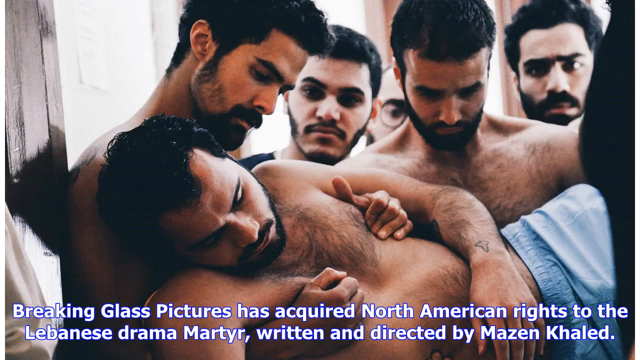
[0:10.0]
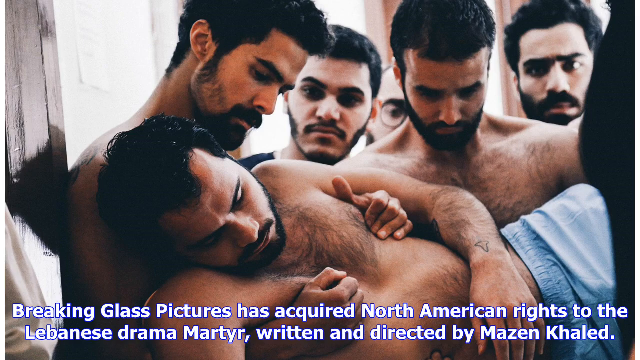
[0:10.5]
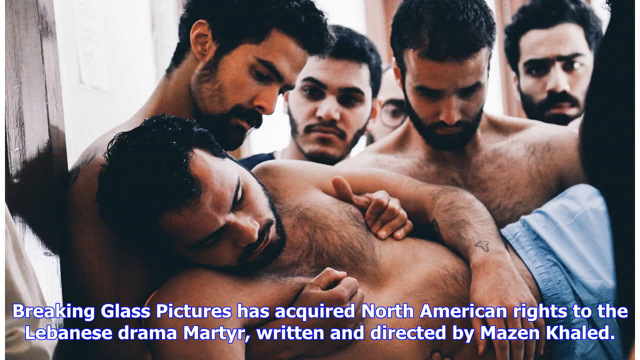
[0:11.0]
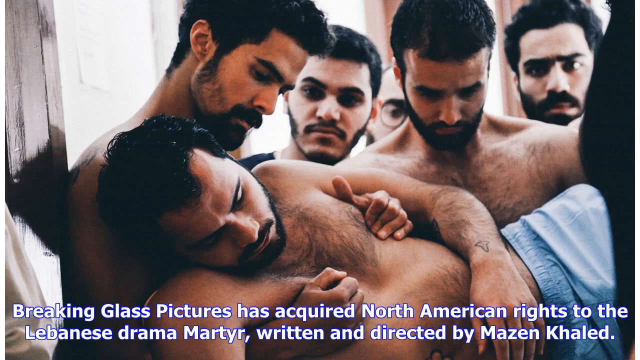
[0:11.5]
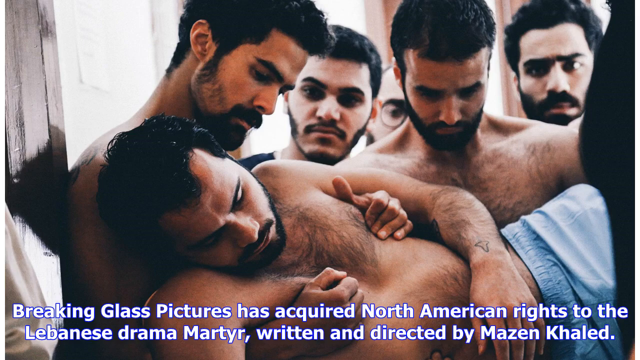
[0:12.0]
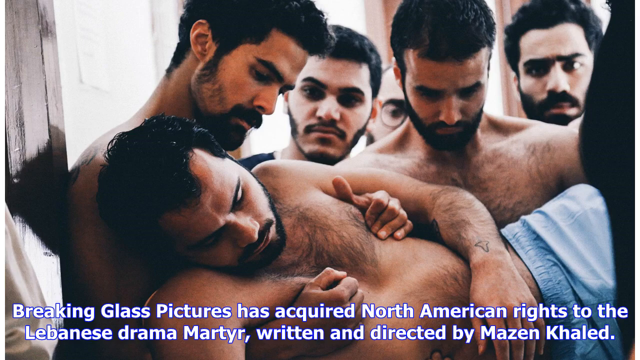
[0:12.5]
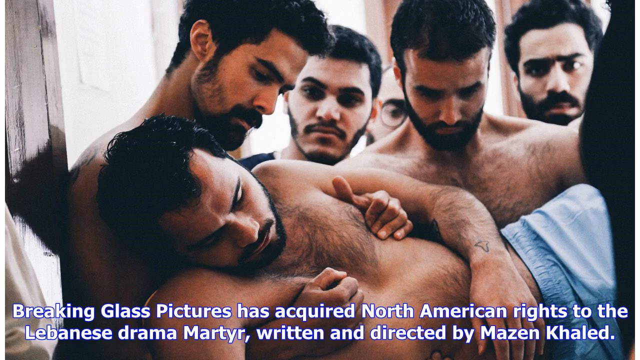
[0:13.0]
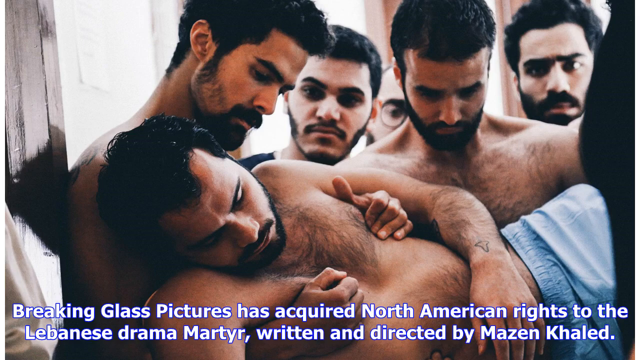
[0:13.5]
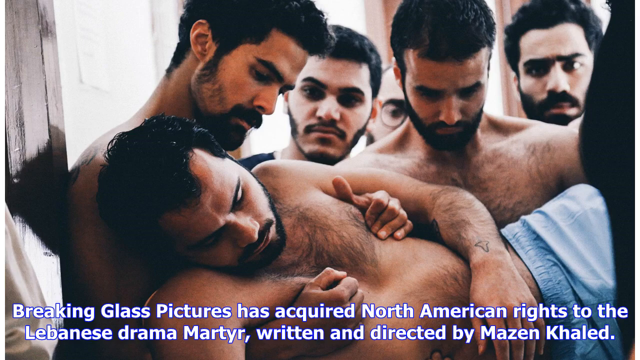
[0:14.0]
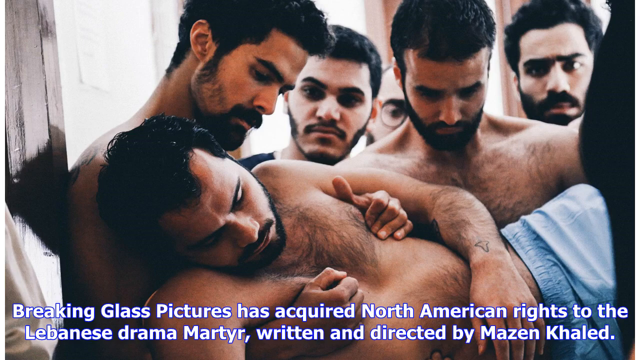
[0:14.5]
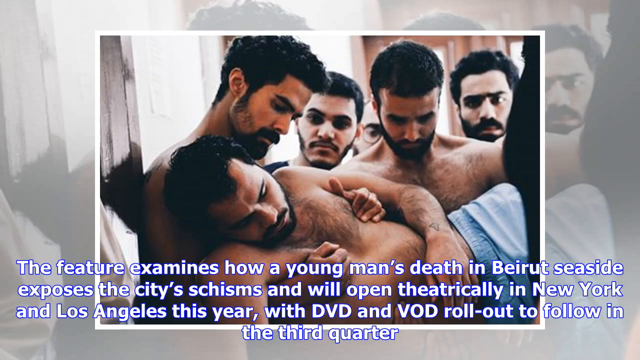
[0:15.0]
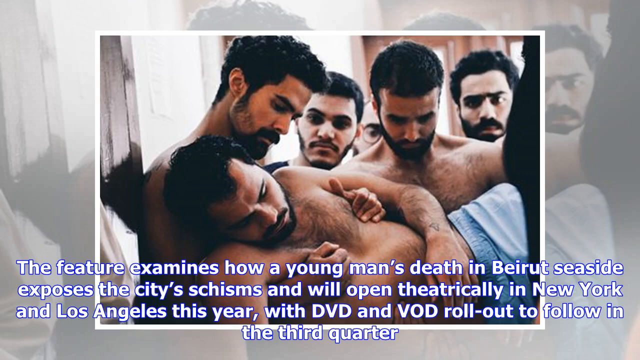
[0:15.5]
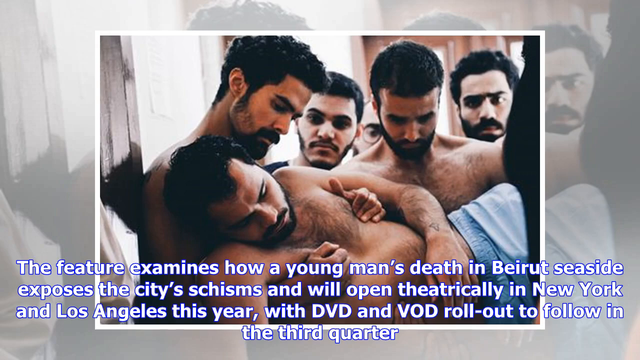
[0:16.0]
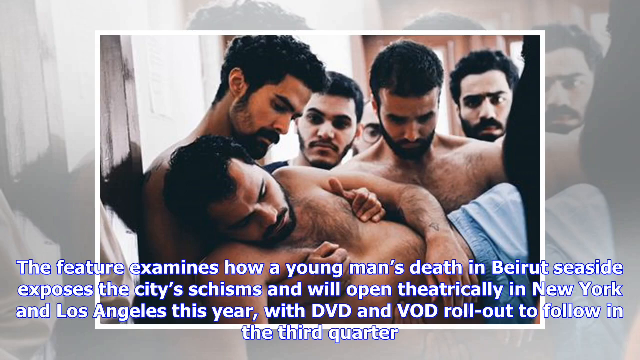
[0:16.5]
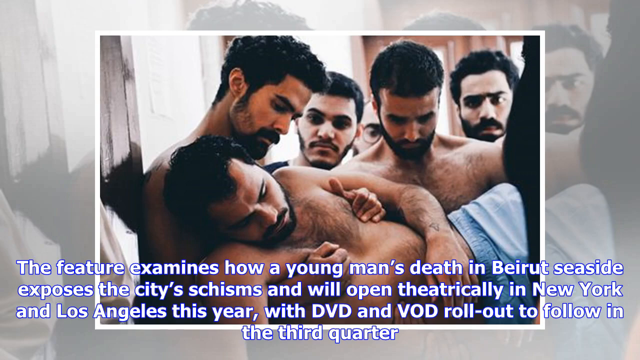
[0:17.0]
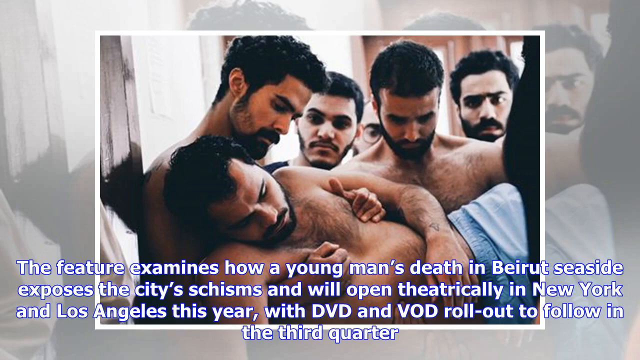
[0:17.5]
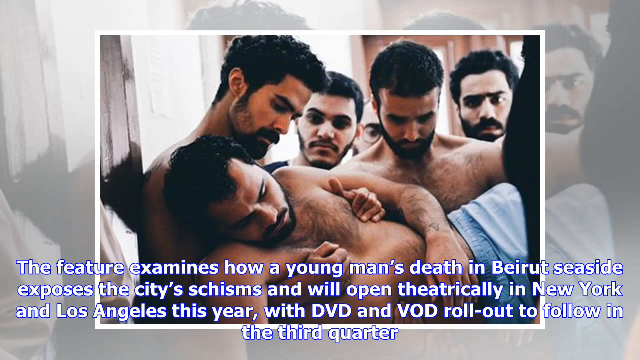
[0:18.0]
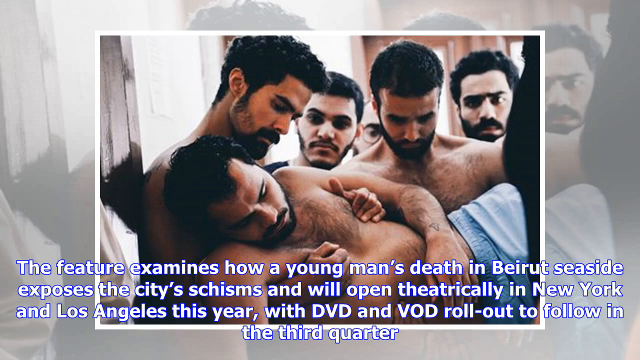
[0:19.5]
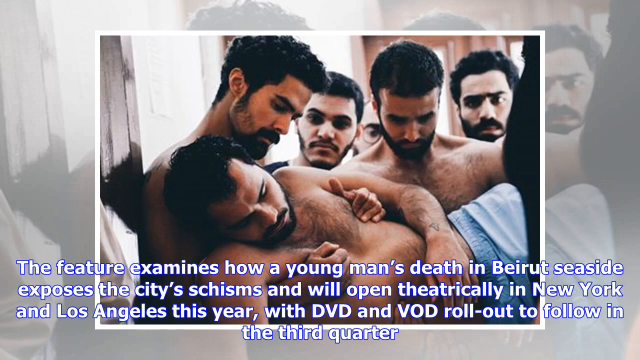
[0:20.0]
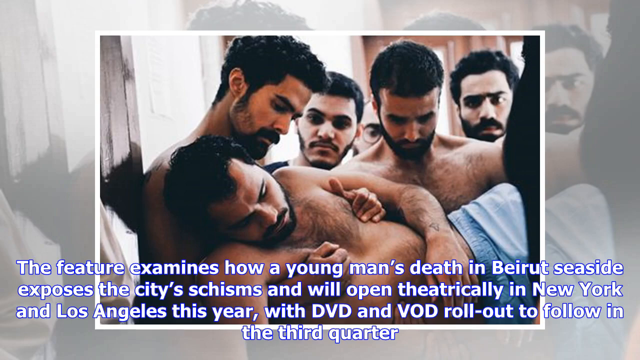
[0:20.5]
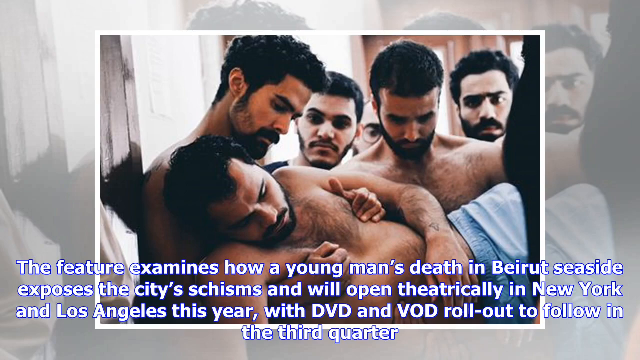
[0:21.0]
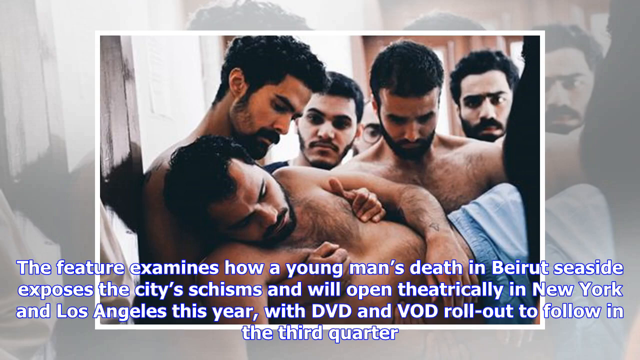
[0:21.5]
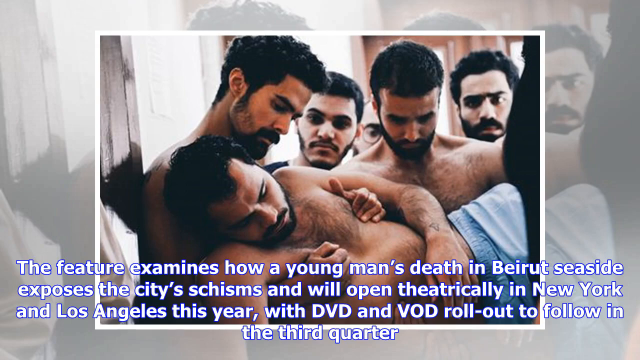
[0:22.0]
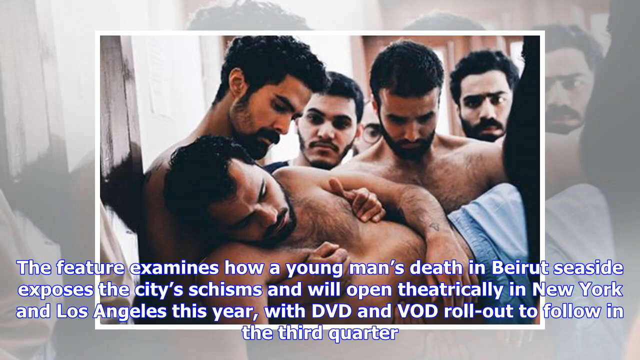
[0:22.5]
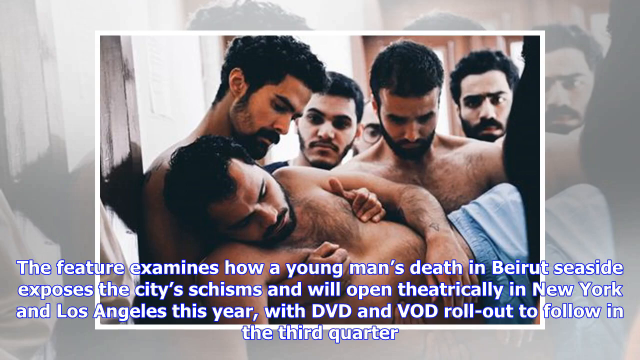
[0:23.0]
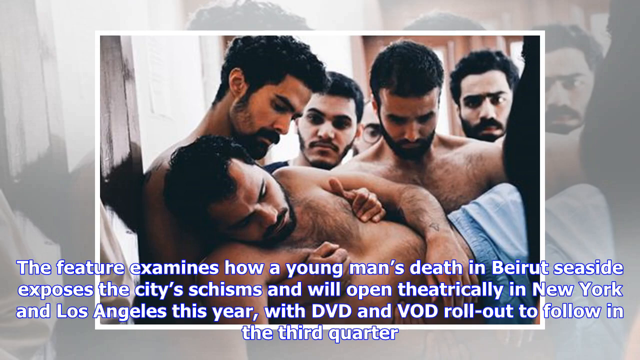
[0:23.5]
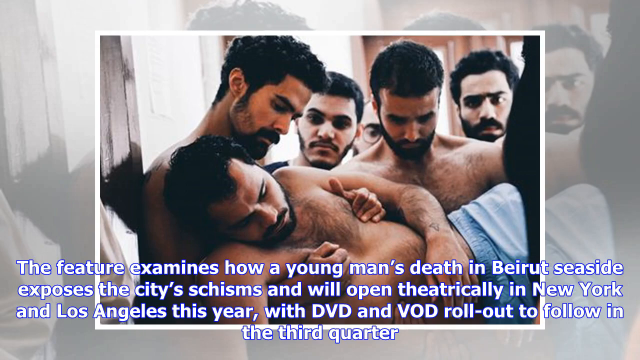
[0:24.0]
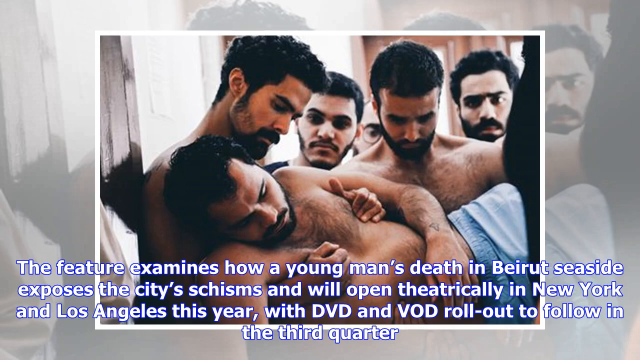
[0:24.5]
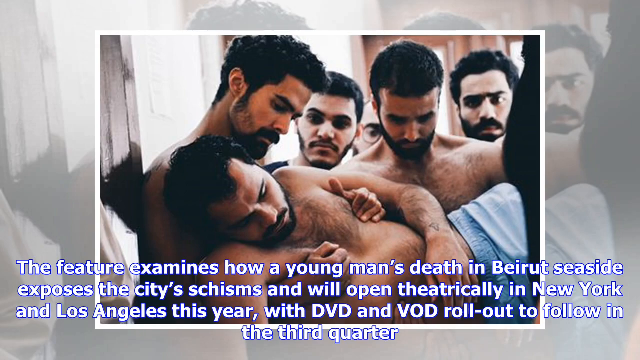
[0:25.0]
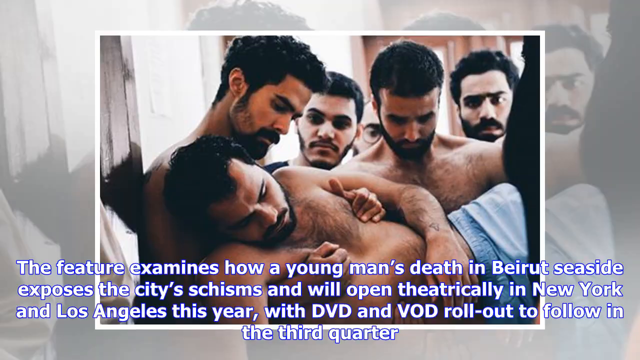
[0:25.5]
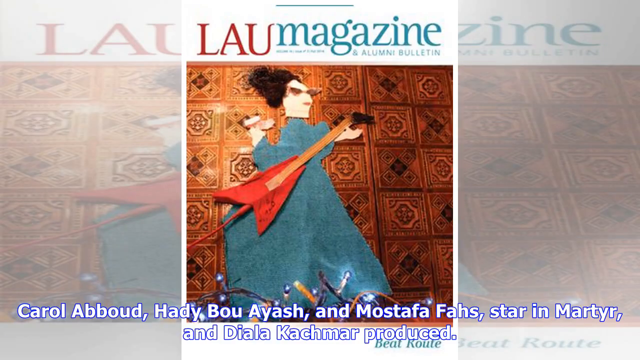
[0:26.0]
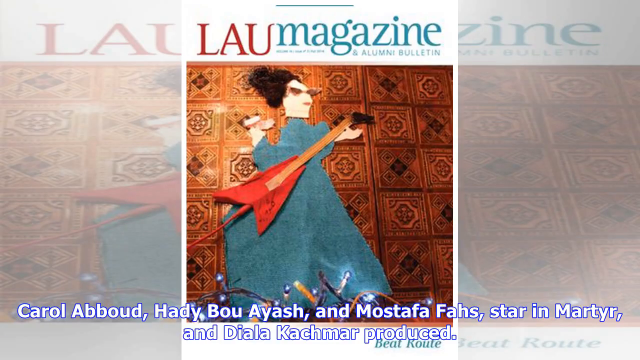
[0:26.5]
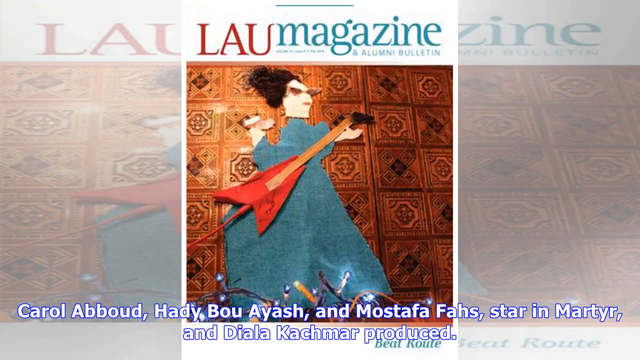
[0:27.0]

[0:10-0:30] Four people with dark brown hair and beards carry the knocked-out person, who wears blue shorts. All of them are shirtless, carrying the naked body. Text on the bottom of the screen reads: "breaking glass pictures has acquired North American rights to the Lebanese drama Martyr." The video cuts to another shot of the image, now smaller, with text that mentions a death in Beirut and the city's schisms and says the film "will open theatrically in New York and Los Angeles this year with DVD and VOD rollout to follow in the third quarter." It then cuts to a magazine cover showing some type of cloth on the ground with some type of guitar on it, and text on the bottom of the screen that includes the word "Martyr."